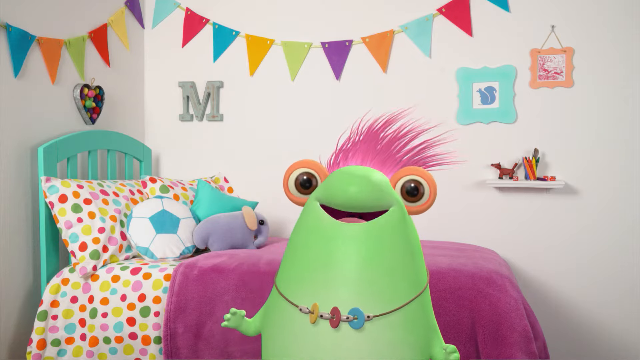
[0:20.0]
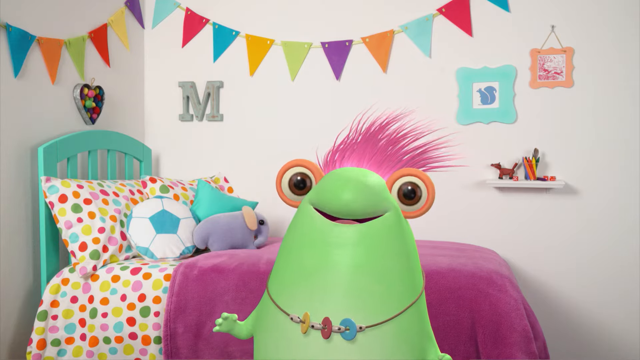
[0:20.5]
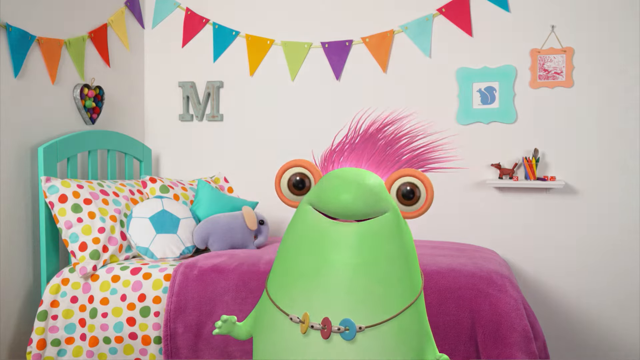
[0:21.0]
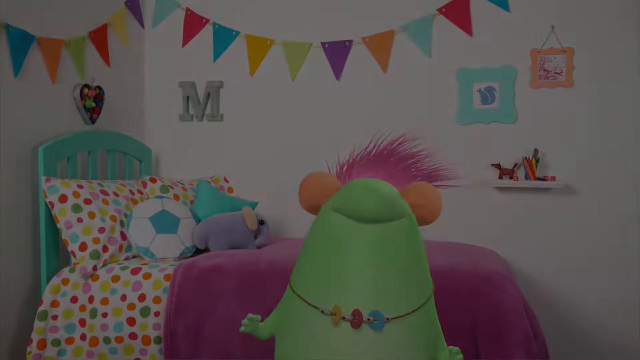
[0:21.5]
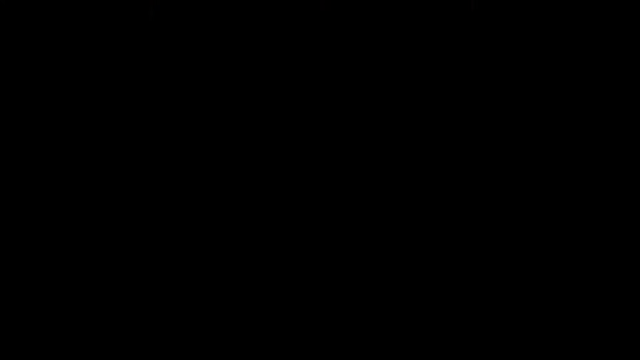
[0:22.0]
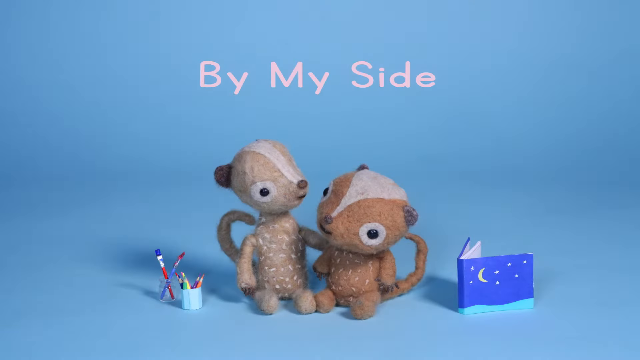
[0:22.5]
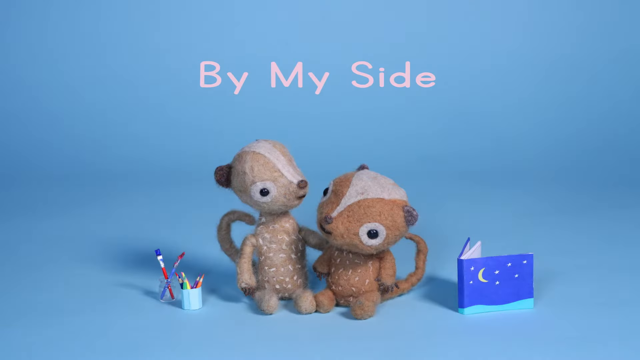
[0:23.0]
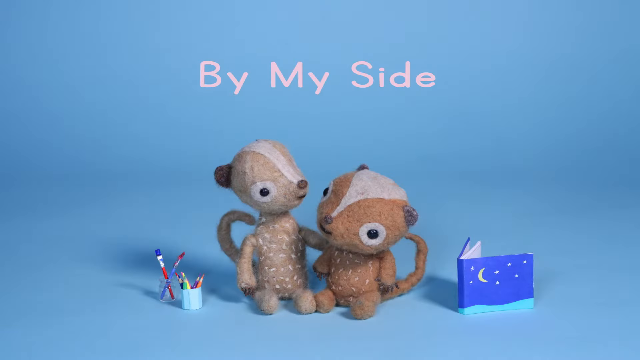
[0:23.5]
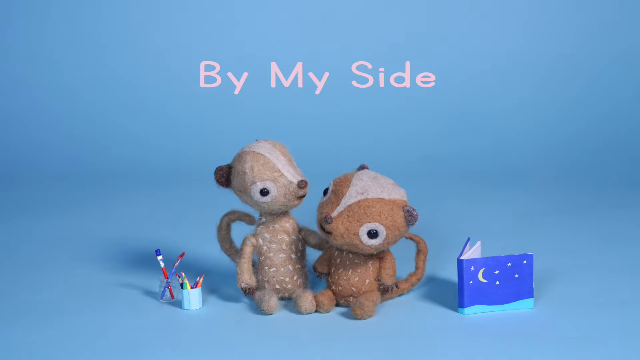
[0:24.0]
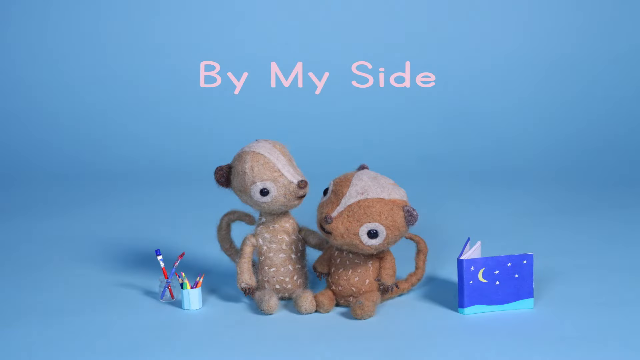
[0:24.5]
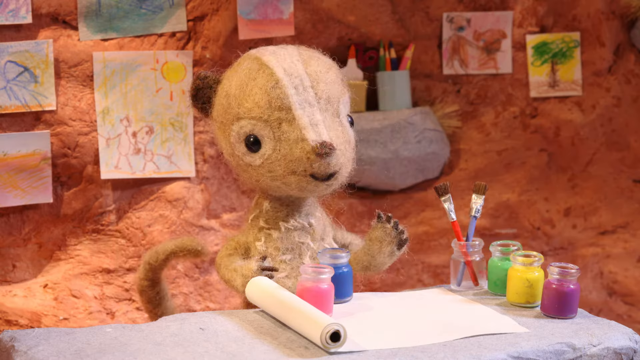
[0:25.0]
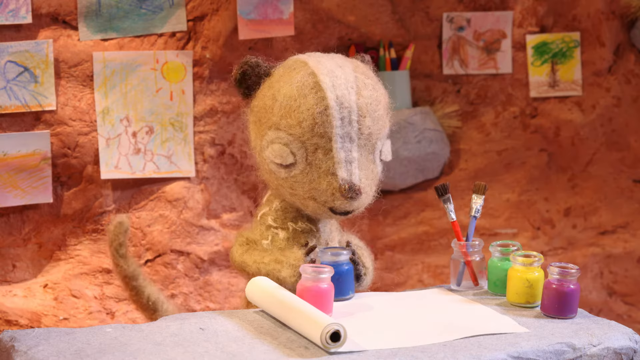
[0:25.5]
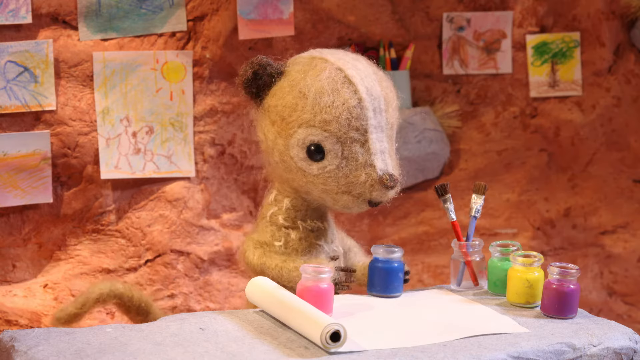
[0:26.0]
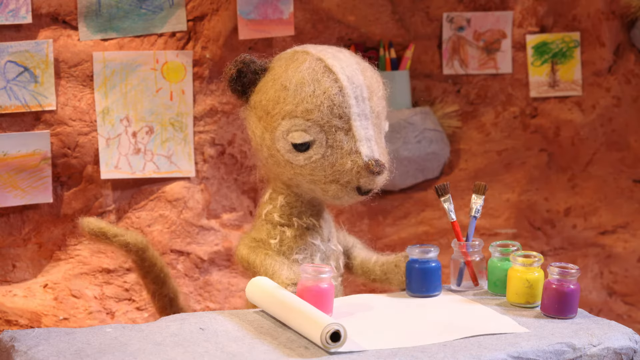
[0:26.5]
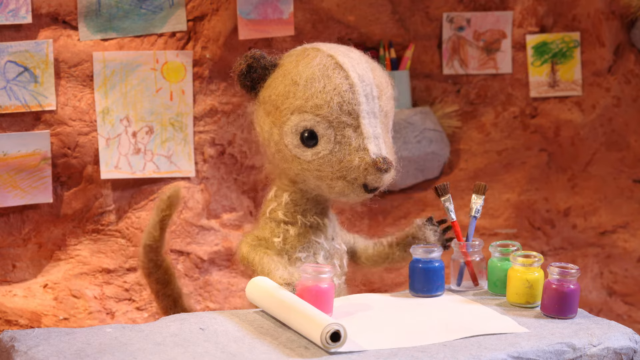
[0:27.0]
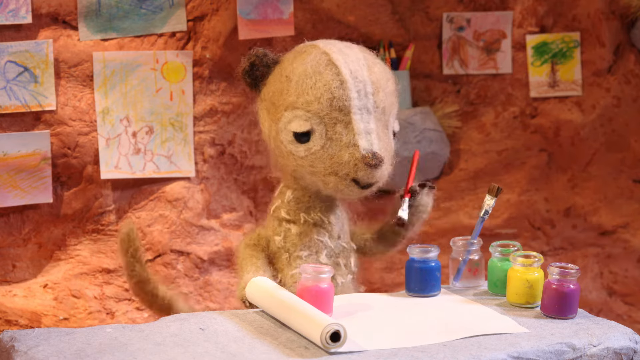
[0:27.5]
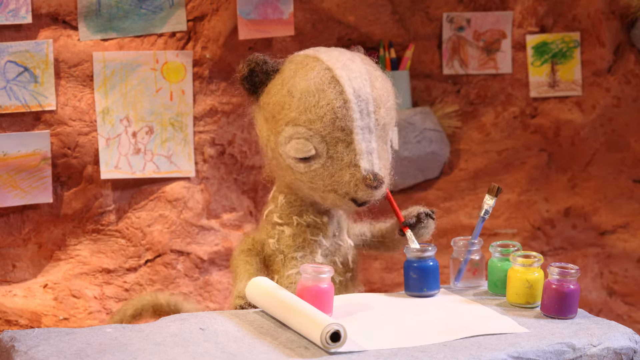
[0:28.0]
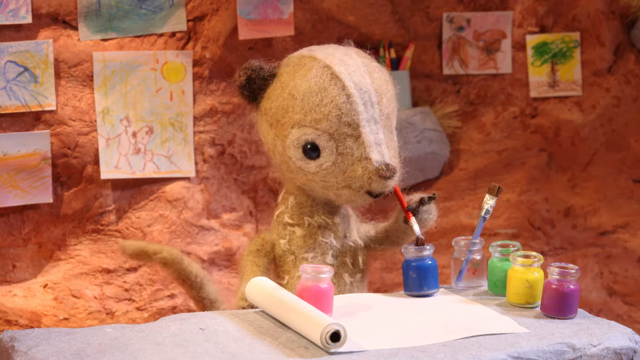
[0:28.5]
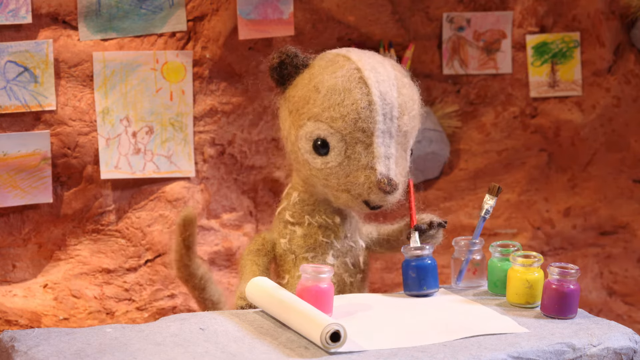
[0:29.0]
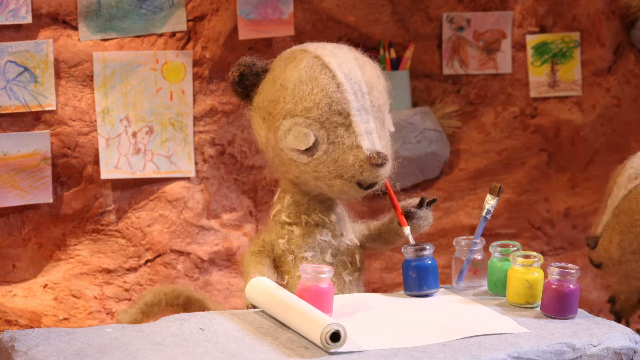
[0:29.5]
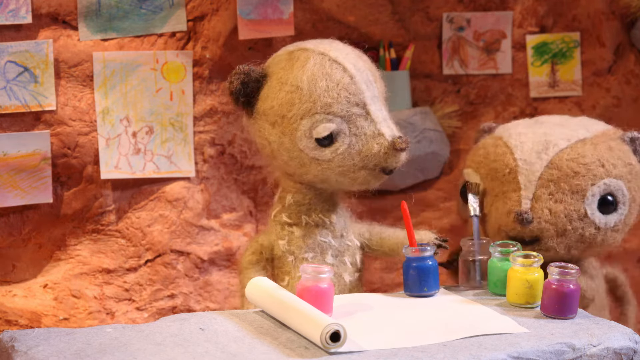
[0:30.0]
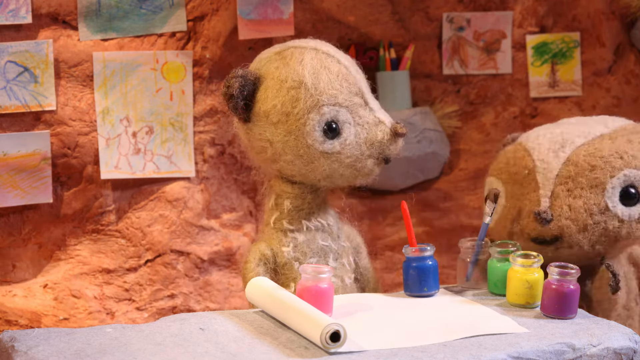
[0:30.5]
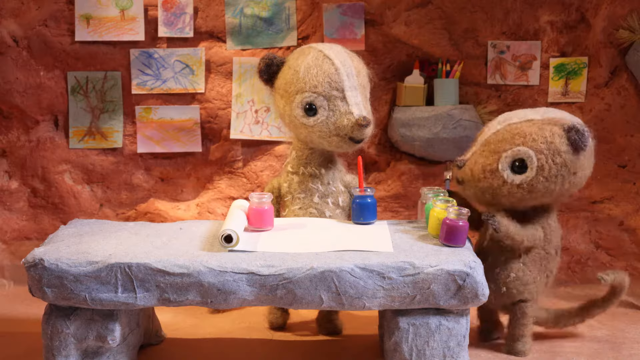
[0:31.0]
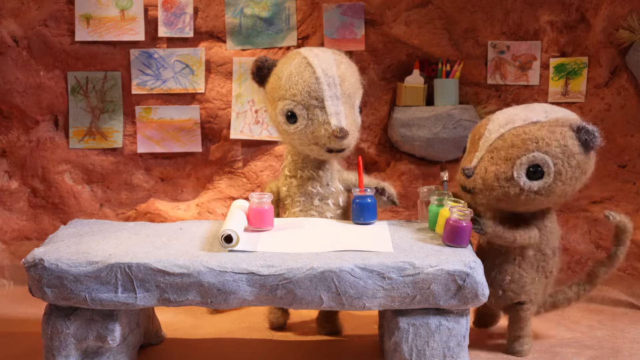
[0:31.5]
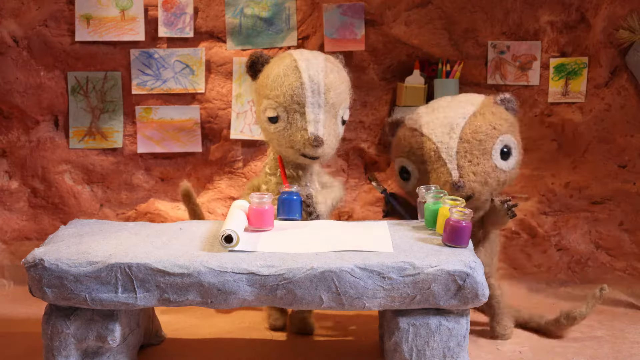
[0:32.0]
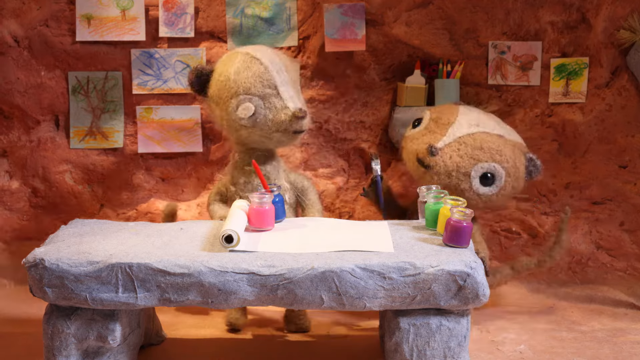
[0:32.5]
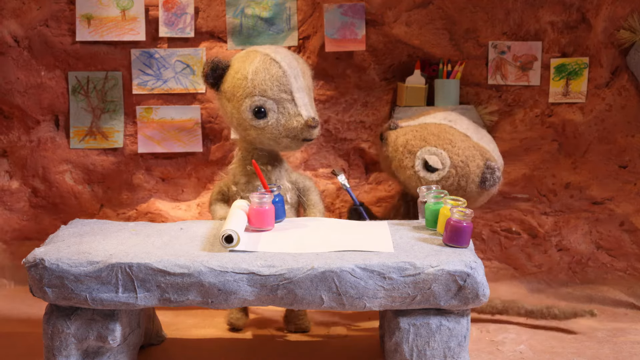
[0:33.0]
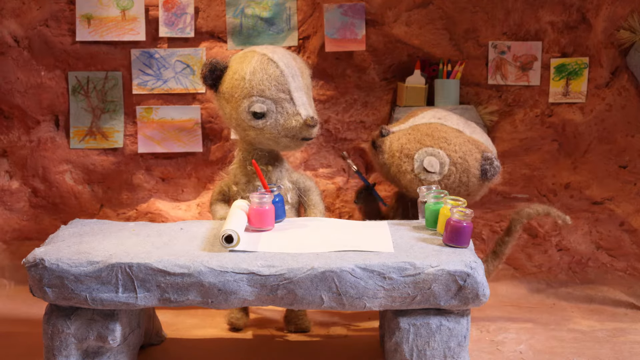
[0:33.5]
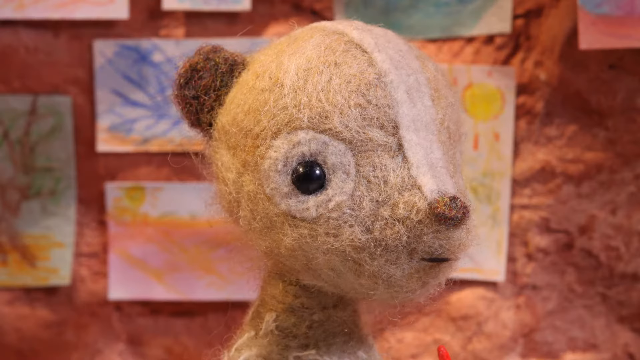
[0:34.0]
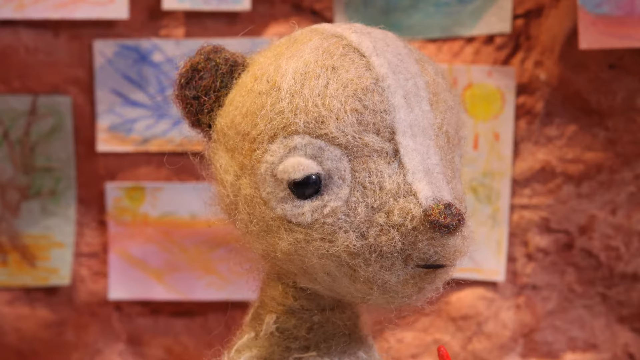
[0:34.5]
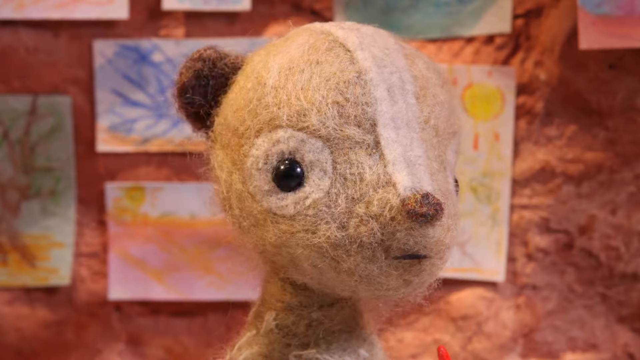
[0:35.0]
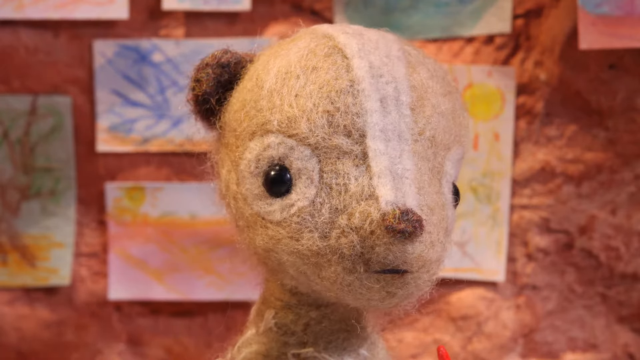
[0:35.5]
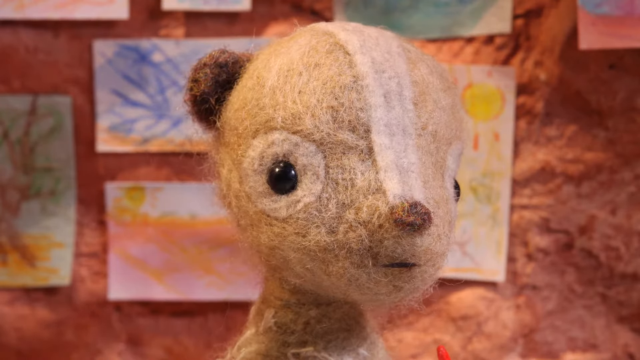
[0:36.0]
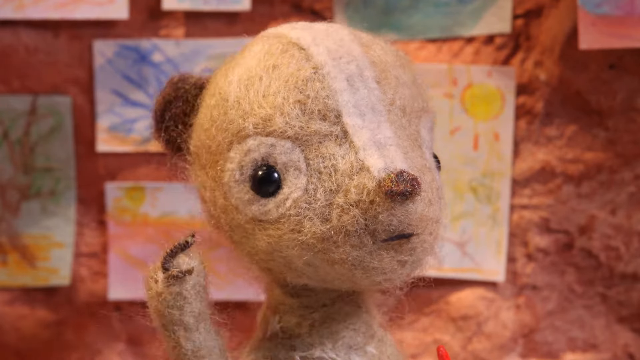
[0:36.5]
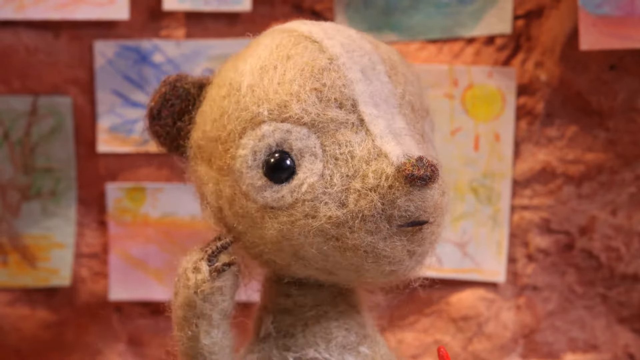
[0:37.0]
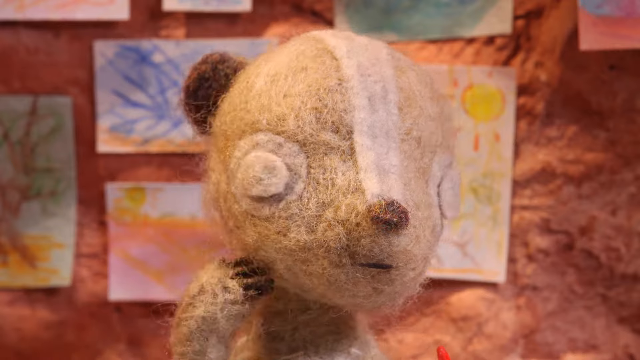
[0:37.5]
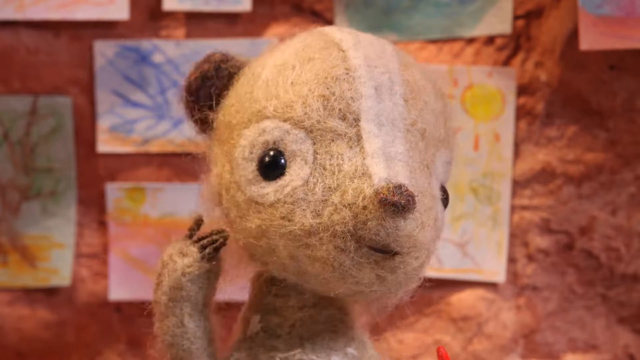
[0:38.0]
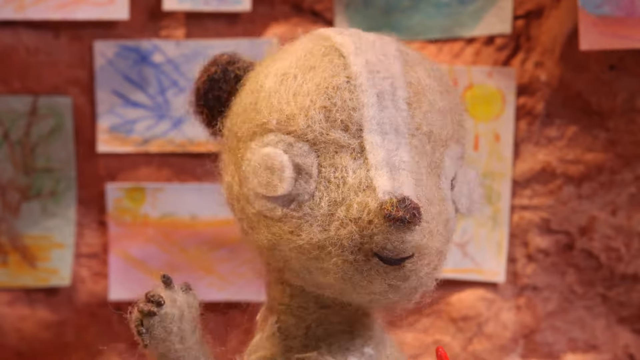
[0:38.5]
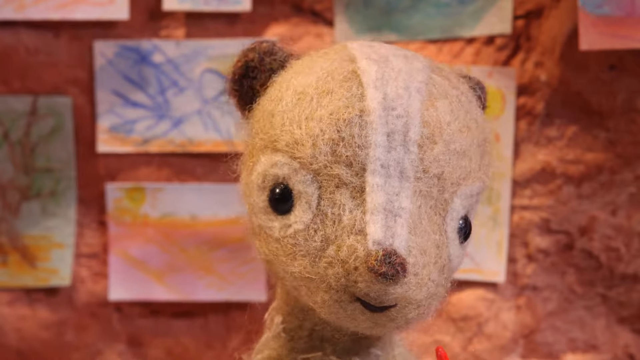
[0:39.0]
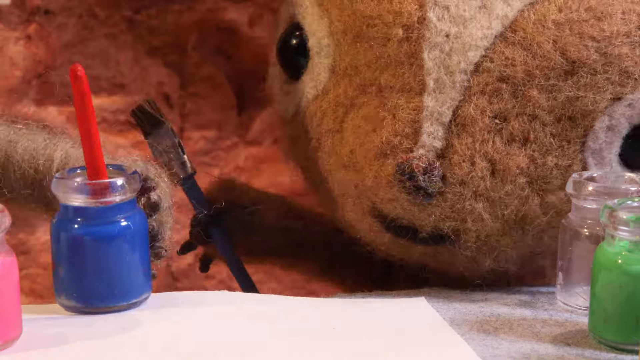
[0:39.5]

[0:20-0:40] Two small characters that look sort of like chipmunks appear; the one on the left is lighter in color and the one on the right is more brown, and both have tails. To their right is a book whose cover shows a moon and stars, and to their left is a cup holding a couple of paintbrushes and maybe some pens and pencils. Above them, pink letters read "By My Side." One of the creatures moves around and paints with blue paint using a red paintbrush, and the other comes in from the right side of the screen with a paintbrush of its own and joins him; they begin to talk to one another. Various pictures hang on the walls in the background, and there are paints in blue, pink, green, yellow and purple.